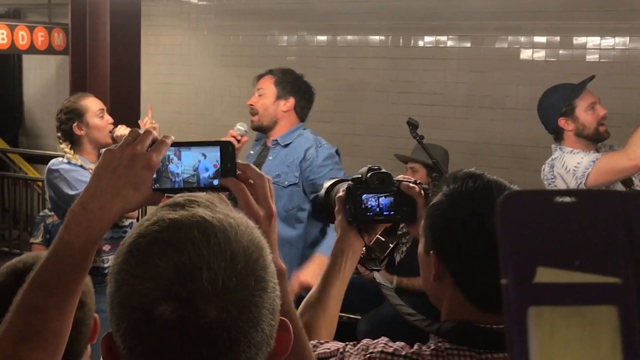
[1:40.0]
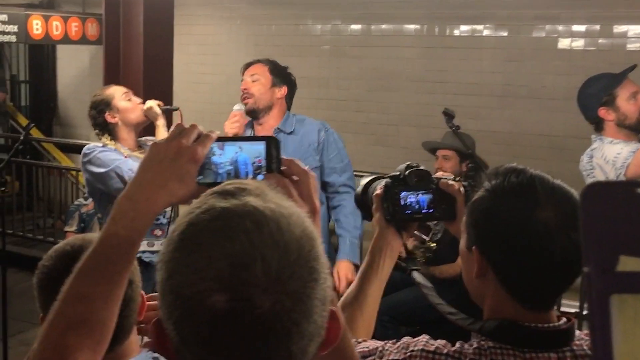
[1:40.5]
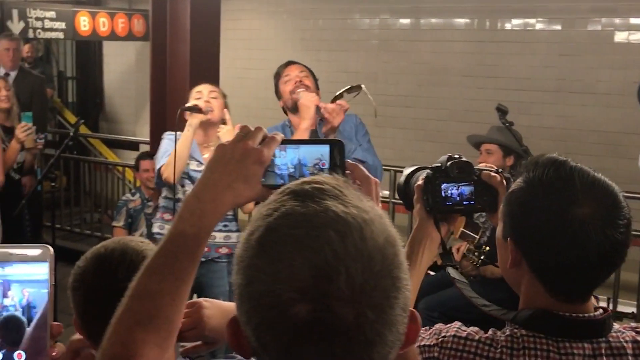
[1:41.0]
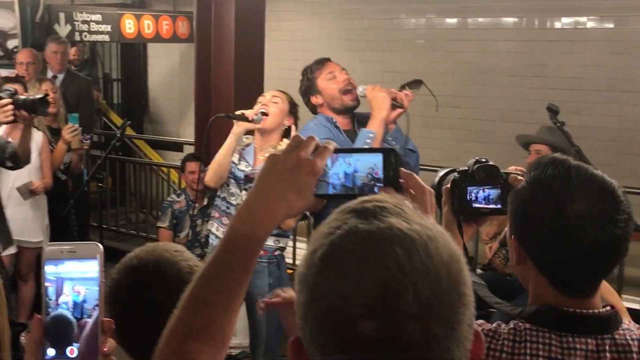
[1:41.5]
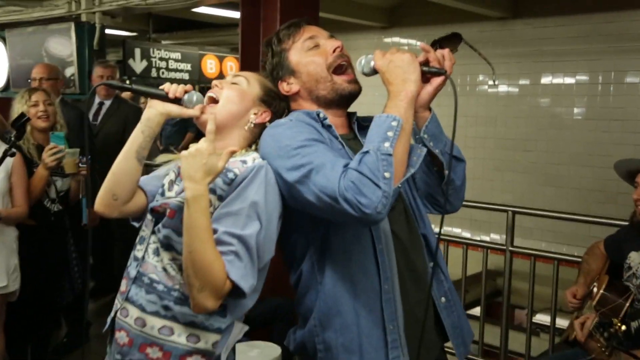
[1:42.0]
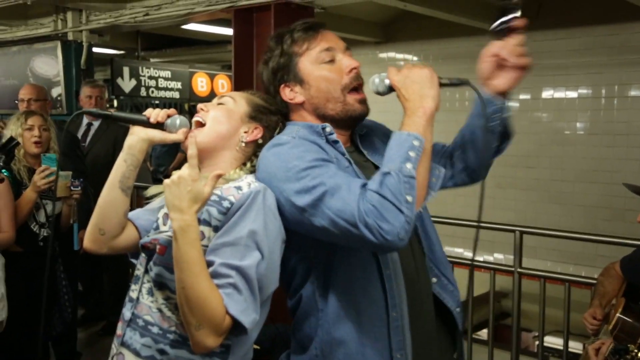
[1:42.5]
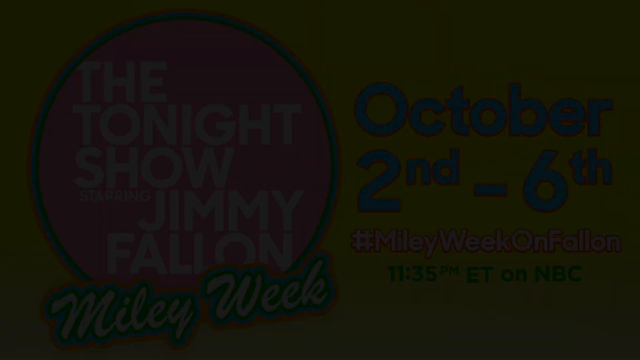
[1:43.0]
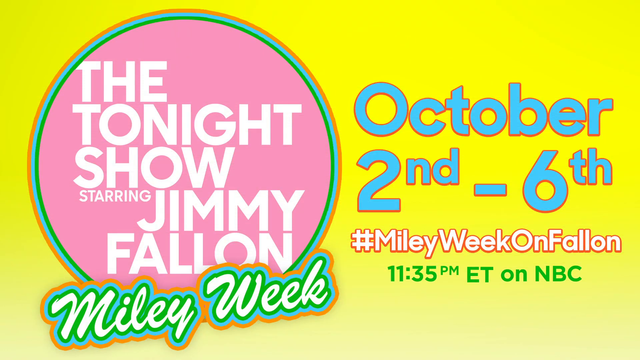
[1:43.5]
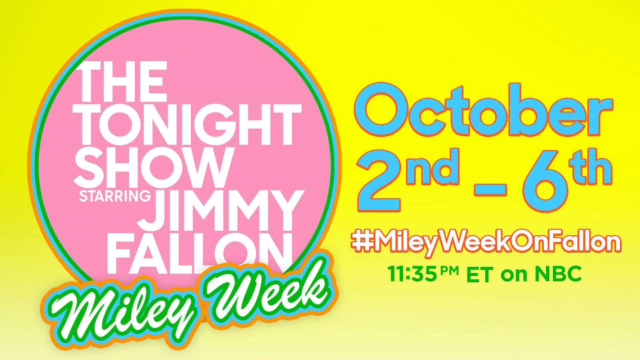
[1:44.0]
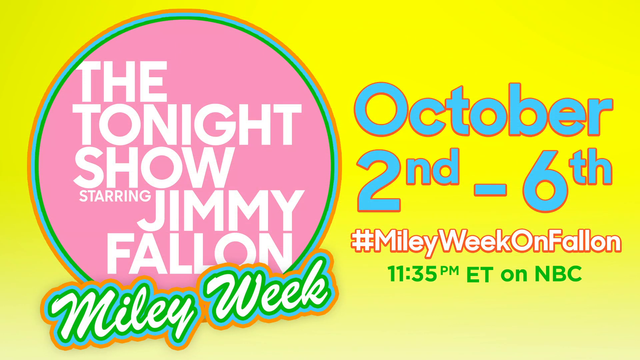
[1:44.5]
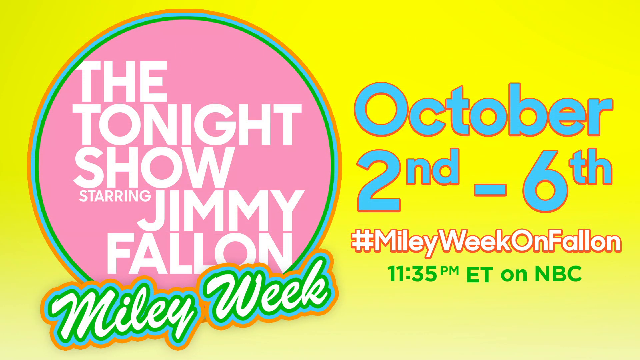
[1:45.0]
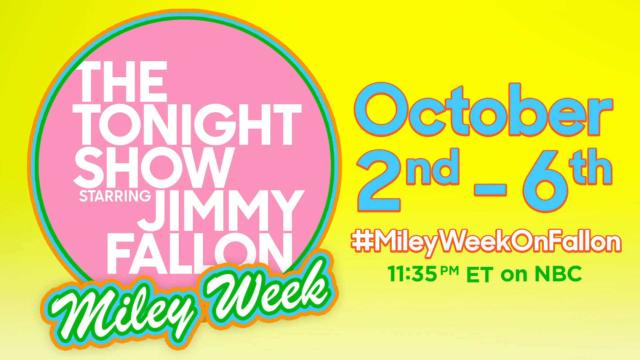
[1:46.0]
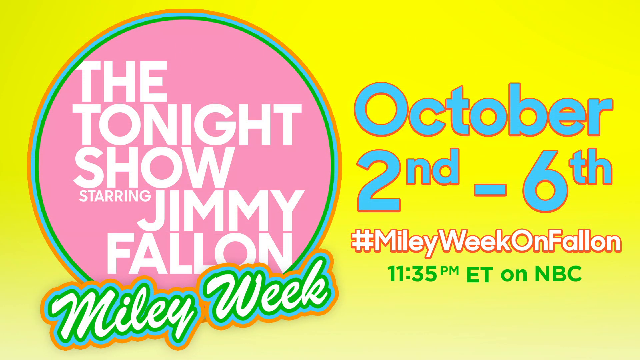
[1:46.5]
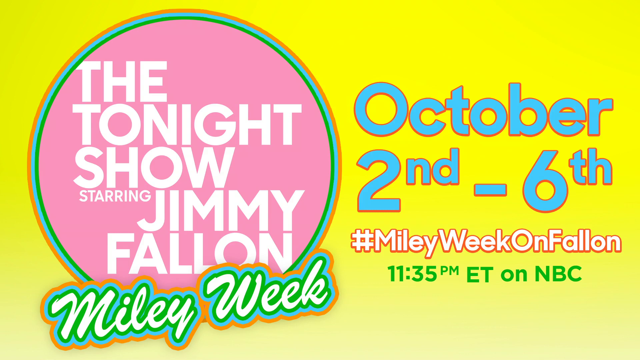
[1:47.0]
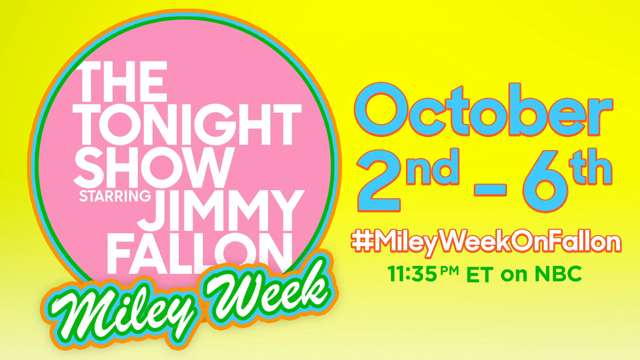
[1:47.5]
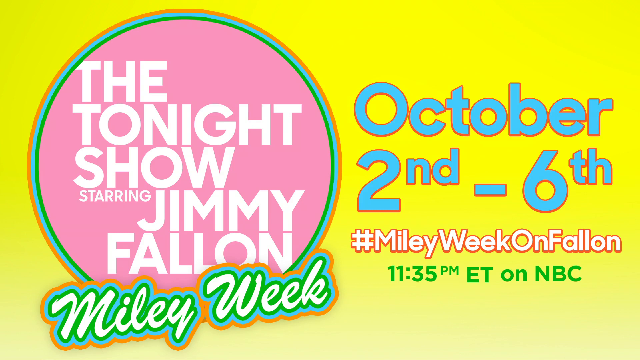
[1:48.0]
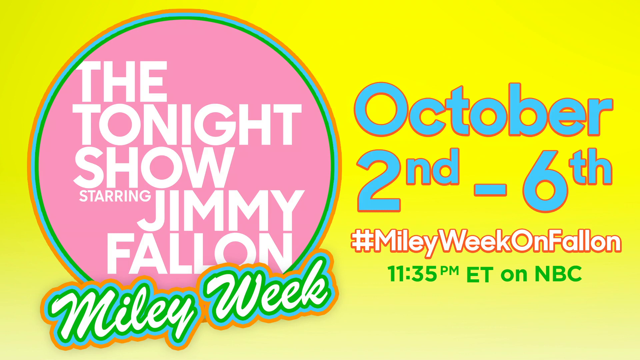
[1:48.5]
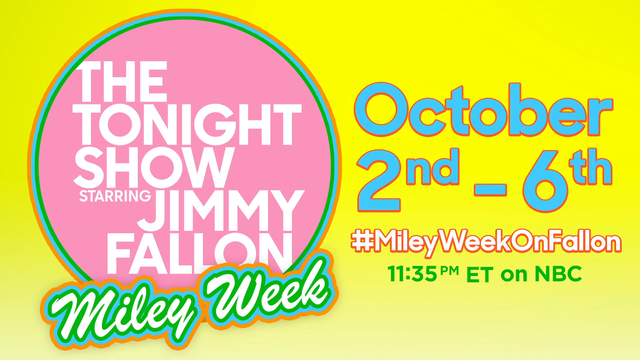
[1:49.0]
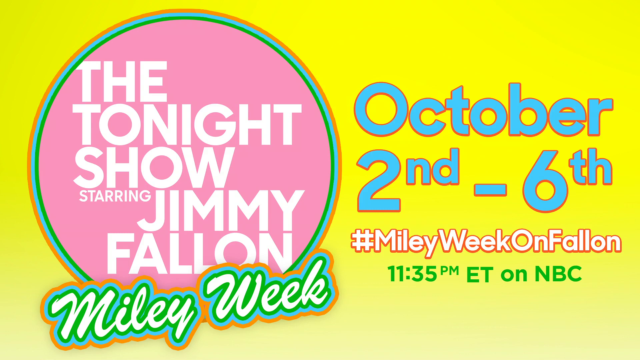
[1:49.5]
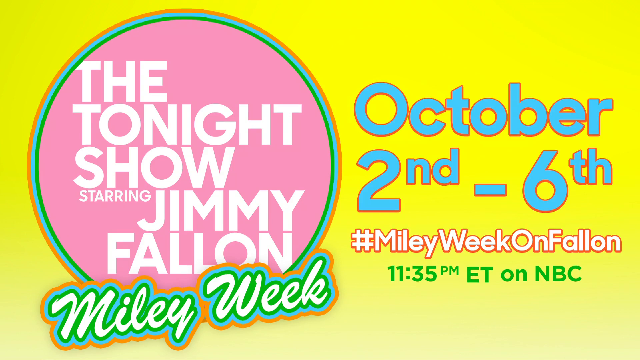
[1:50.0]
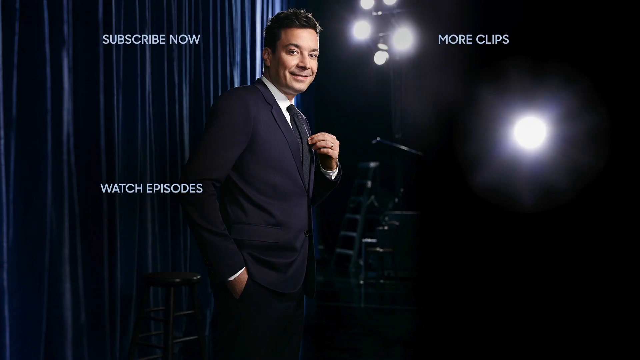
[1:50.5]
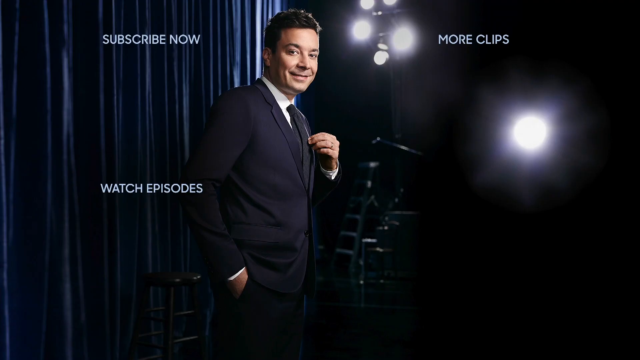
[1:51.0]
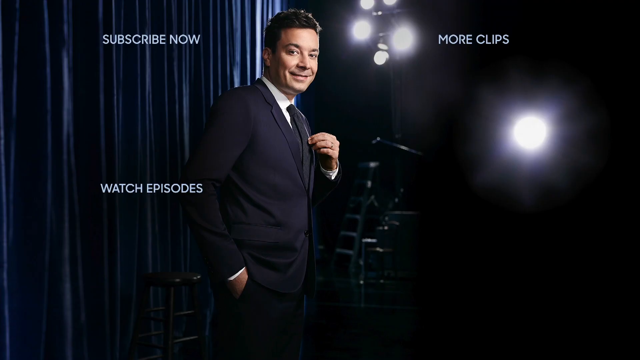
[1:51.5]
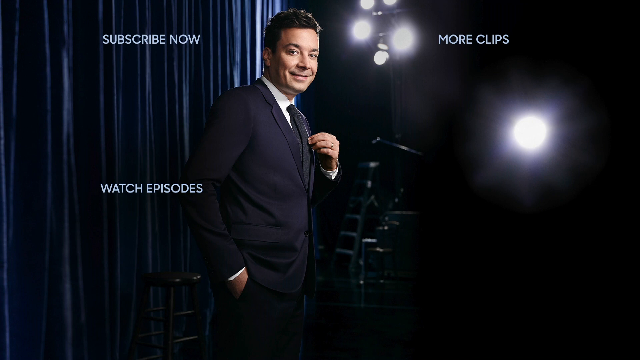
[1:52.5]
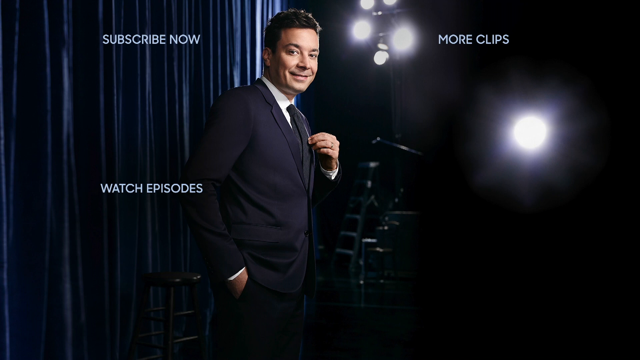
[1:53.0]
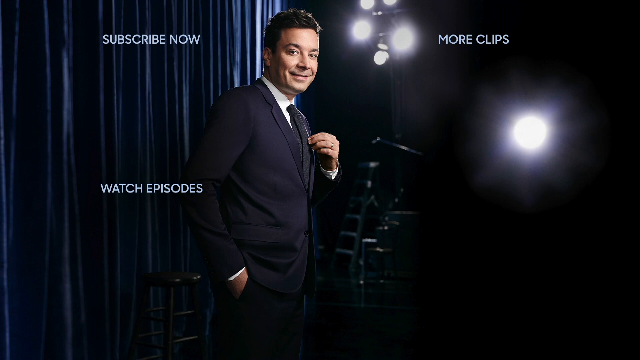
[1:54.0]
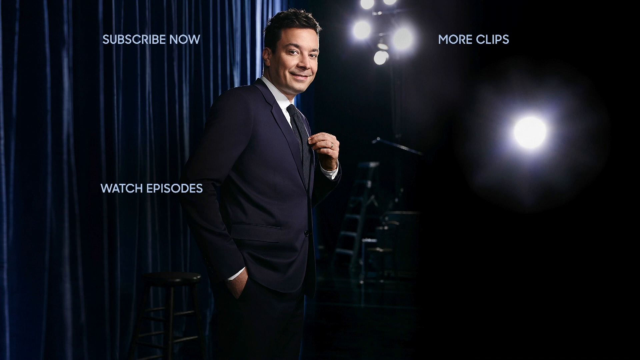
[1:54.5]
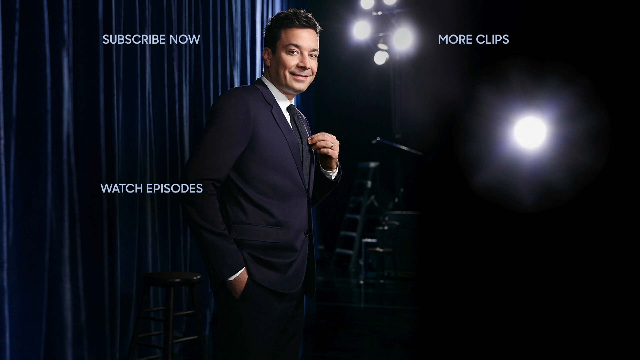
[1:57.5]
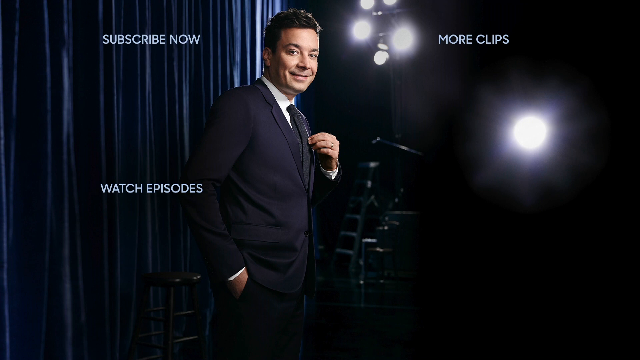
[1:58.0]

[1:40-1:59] Everybody has calmed down a little. Miley and Jimmy, still in the same clothes, stand close together singing slowly, then tilt their heads back and turn so their backs face each other as they sing loudly with heads up. Only a little of the crowd is visible: the tops of a few heads from behind, a few people in the left corner, and the guitar player. The video cuts to a yellow background that goes about two thirds of the way down and then gets a little wider on the left side. A big circle reaches almost to the top and bottom, with an orange border, then light green, then dark green, and a pink center. Inside it, in white, is "The Tonight Show starring Jimmy Fallon", with "Miley week" underneath in white with green trim. On the other side, text reads "October 2nd through 6th" in blue, "#Miley week on Fallon" in white with a red border, and "1135 p.m. Eastern Standard Time NBC" in green. The video then cuts to an image of Jimmy facing toward the right, looking straight ahead in a dark room.